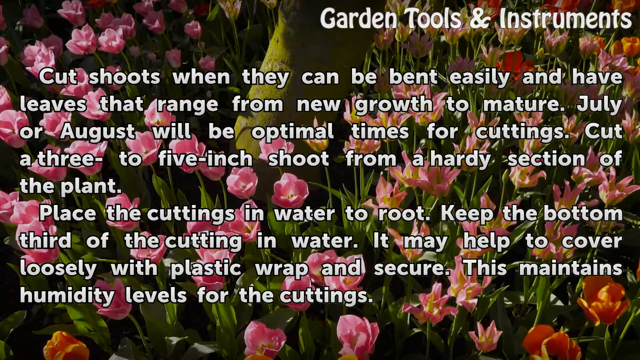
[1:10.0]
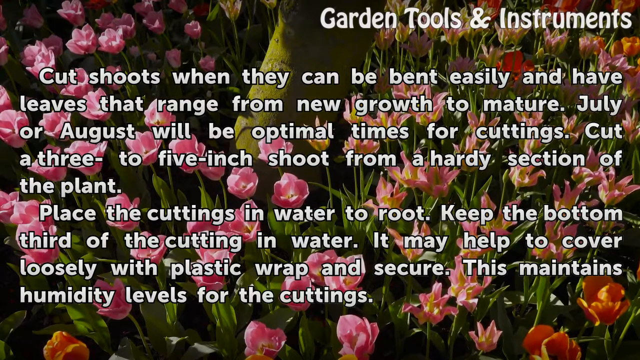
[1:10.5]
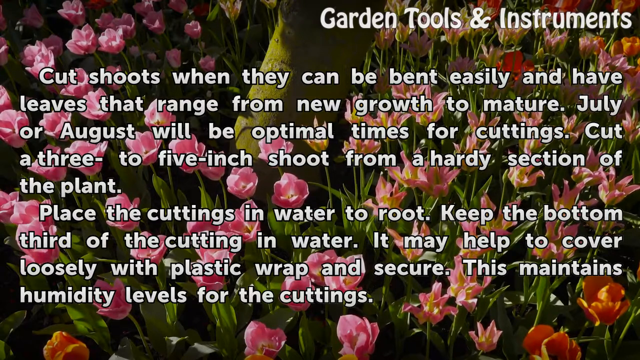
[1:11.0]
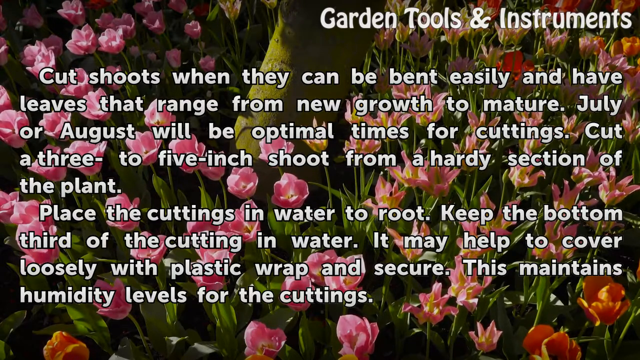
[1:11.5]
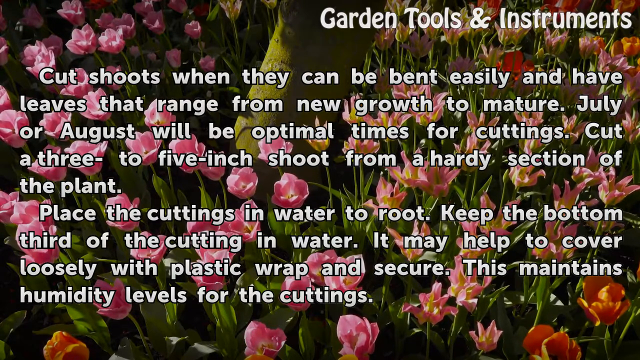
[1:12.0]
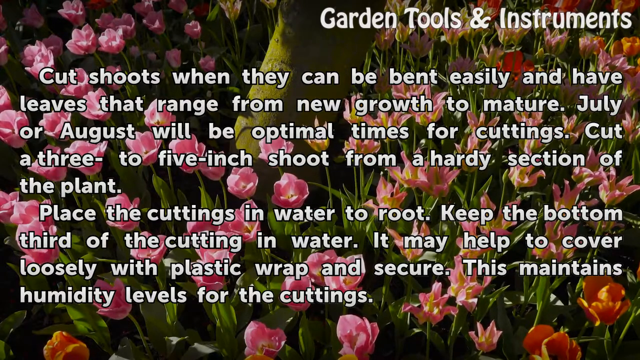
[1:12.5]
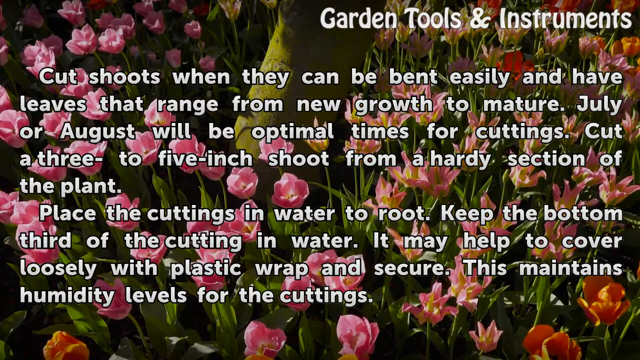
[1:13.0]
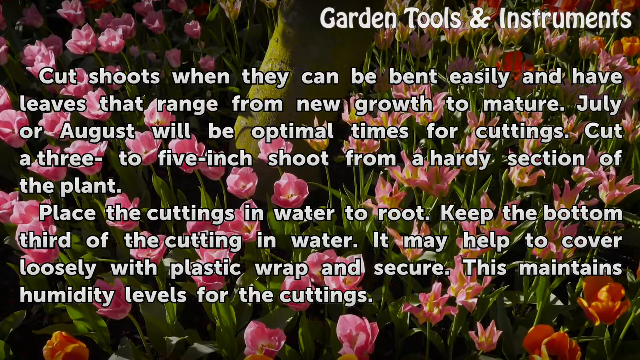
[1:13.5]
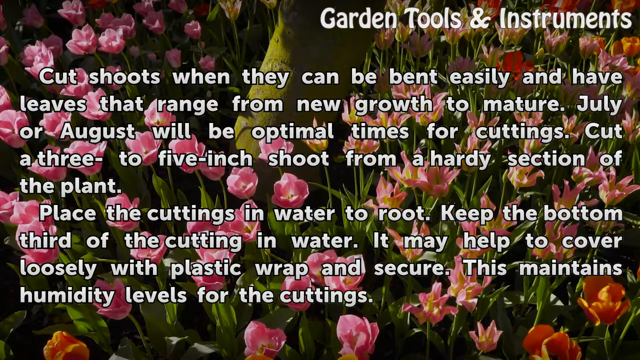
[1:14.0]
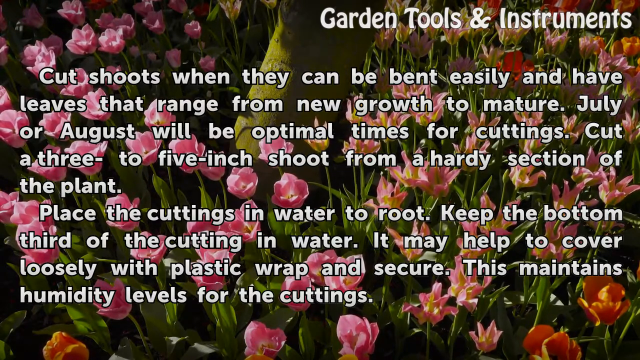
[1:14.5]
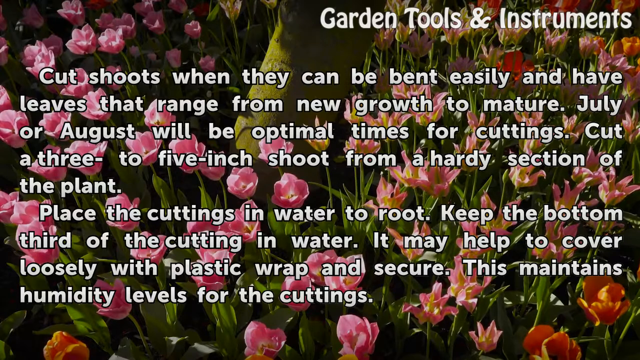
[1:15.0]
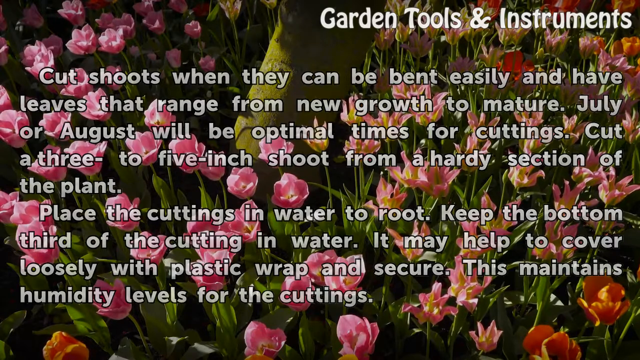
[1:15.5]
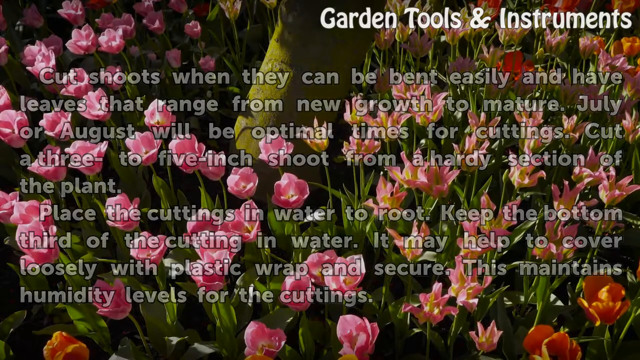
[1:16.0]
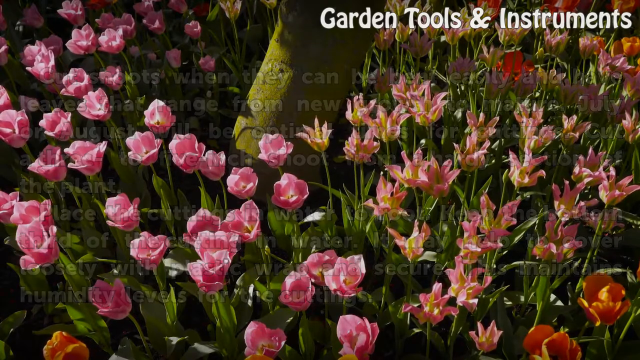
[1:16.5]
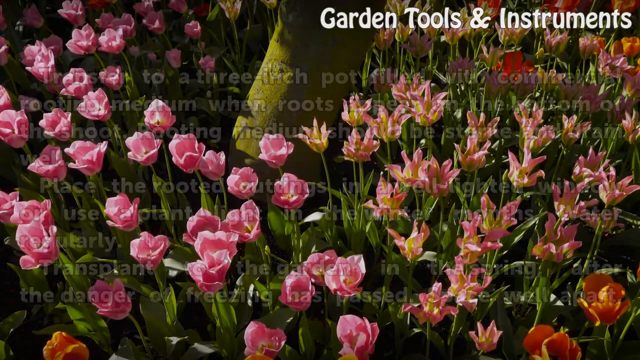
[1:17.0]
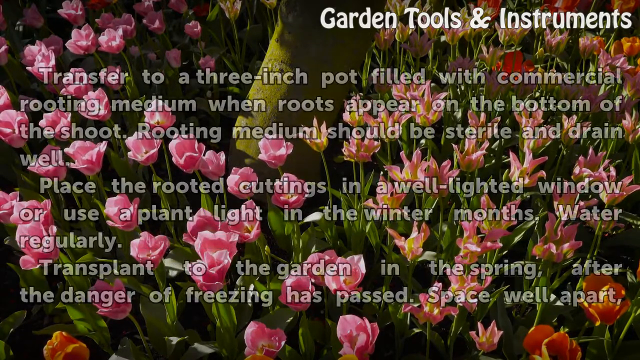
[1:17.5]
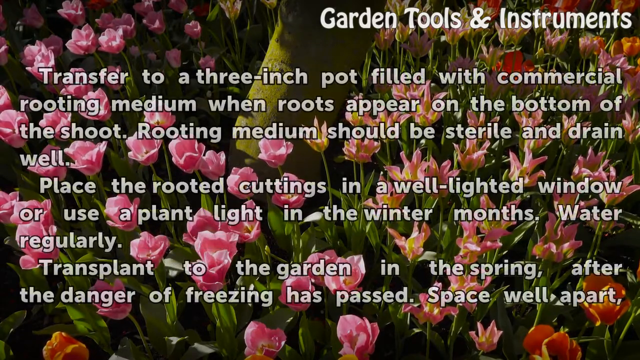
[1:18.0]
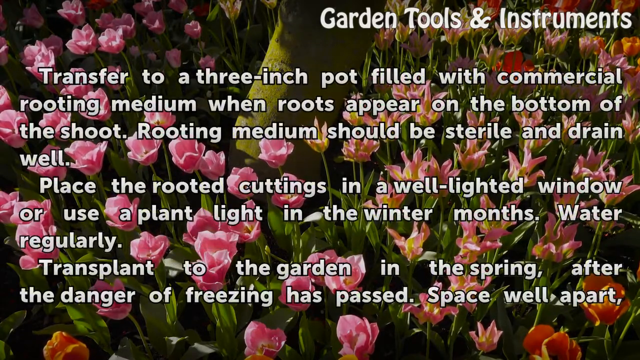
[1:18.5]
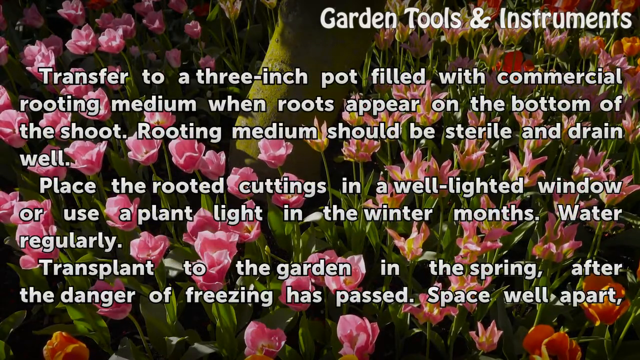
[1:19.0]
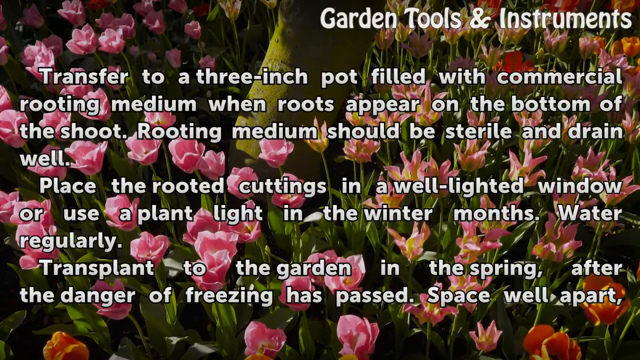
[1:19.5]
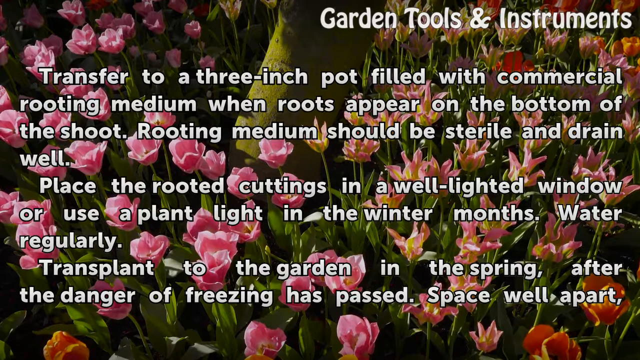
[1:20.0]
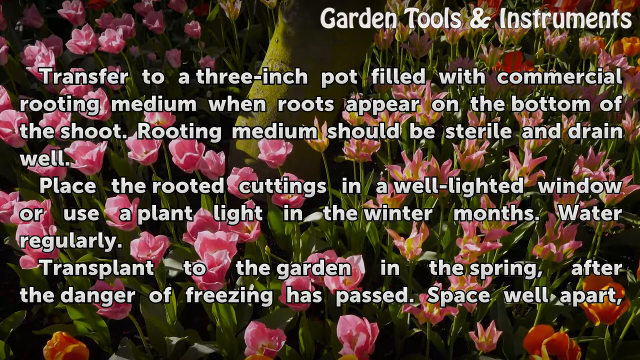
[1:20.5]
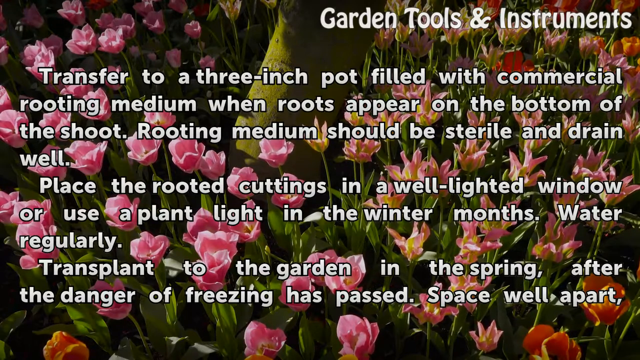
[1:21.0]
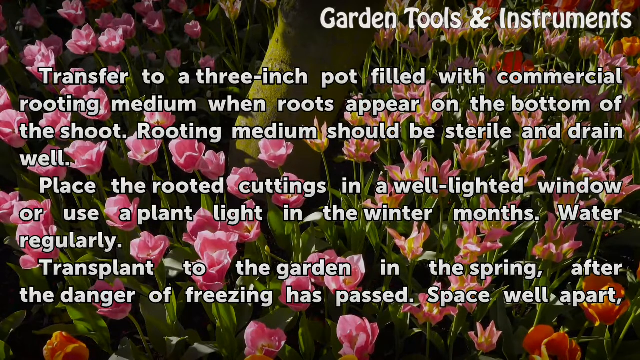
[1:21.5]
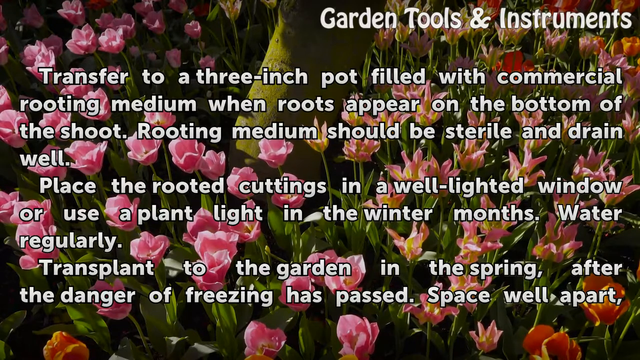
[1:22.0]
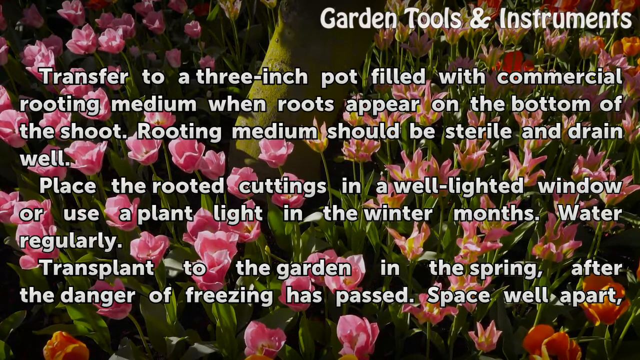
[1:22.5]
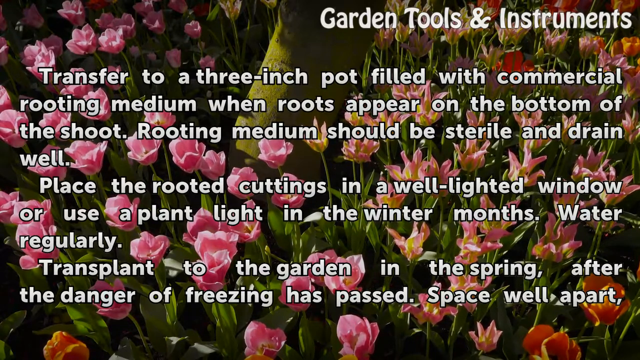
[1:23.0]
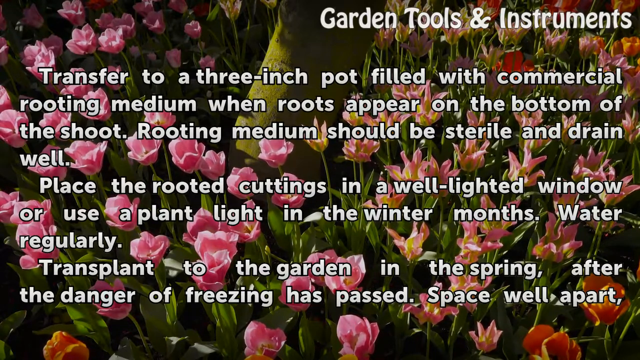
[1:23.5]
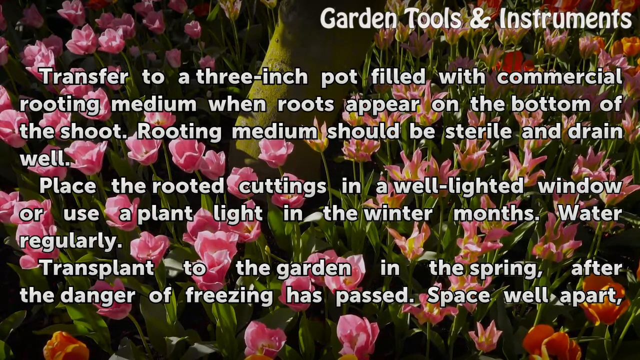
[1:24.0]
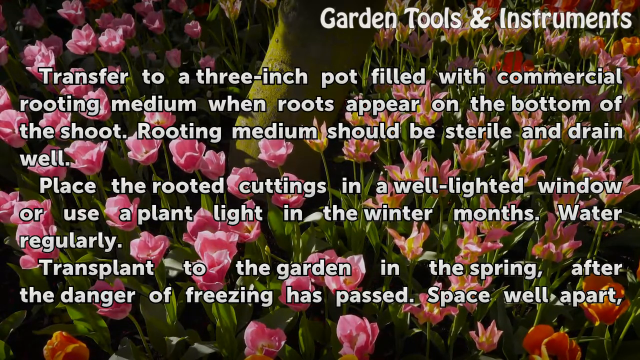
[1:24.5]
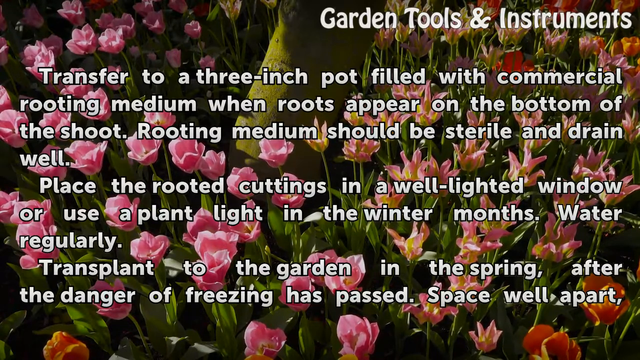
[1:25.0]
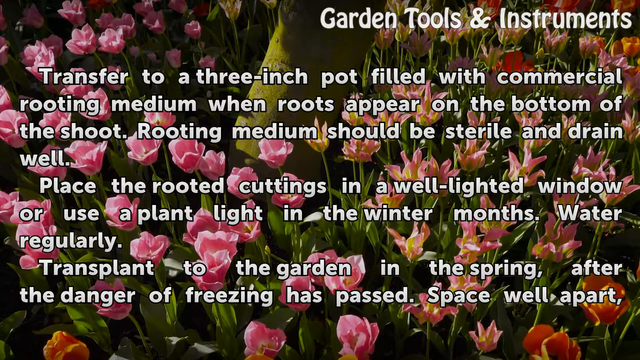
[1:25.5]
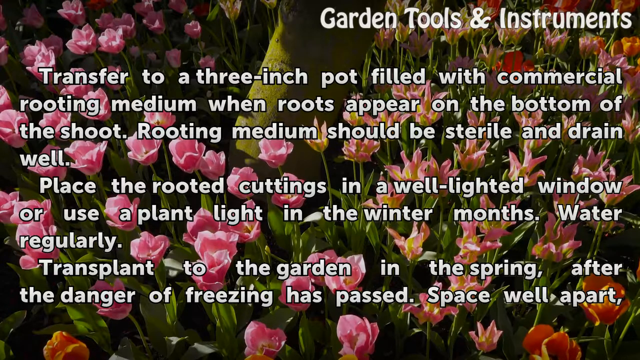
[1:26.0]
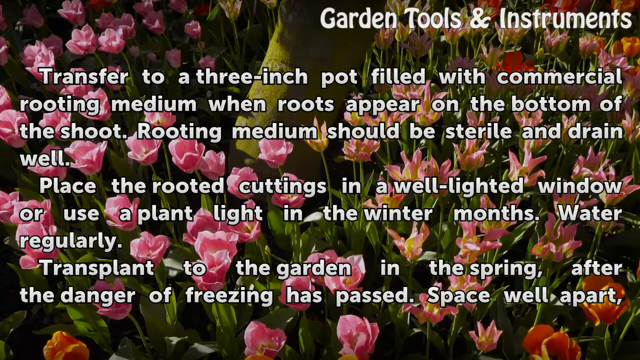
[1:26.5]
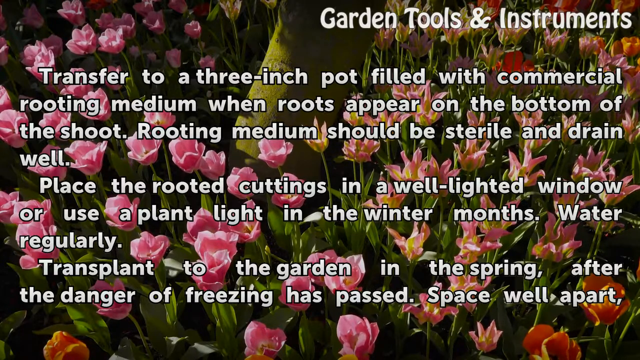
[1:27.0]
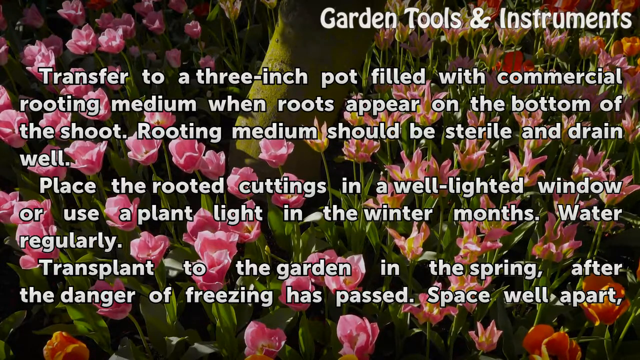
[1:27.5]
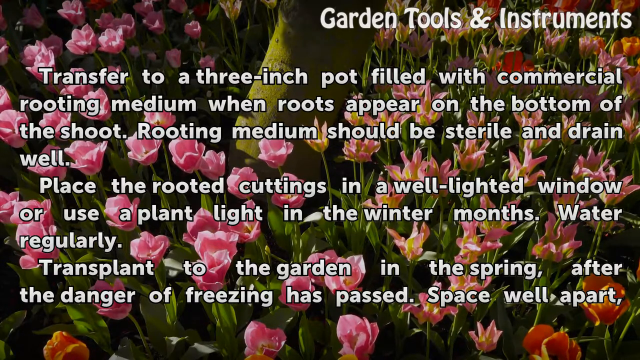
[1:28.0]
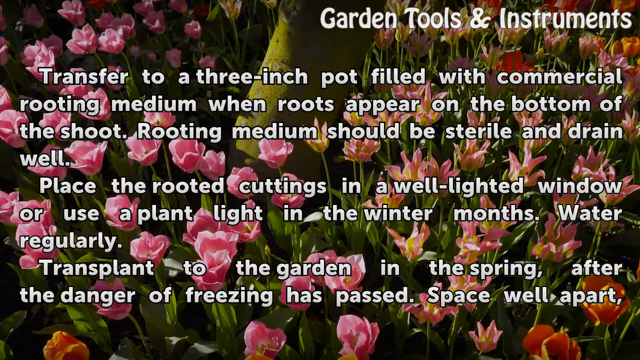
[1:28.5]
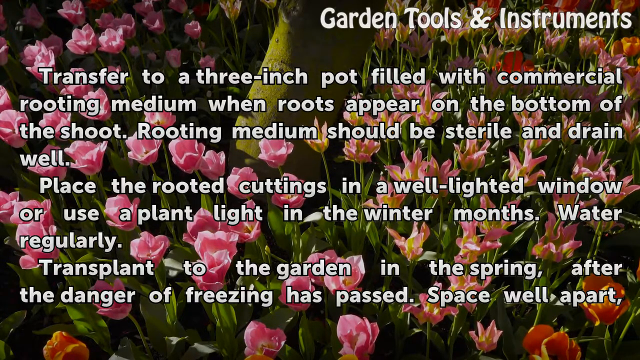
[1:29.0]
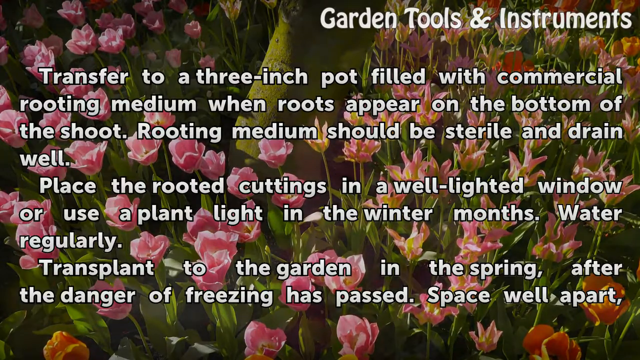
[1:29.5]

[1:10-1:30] Pink decorative flowers sway slowly in the wind in the background. Superimposed over them is white text reading "Cut shoots when they can be bent easily and have leaves that range from new growth to mature. July or August will be the optimal times for cuttings. Cut a 3 to 5 inch shoot from a hardy section of the plant. Place the cuttings in water to root. Keep the bottom third of the cutting in water. It may help to cover loosely with plastic wrap and secure. This maintains humidity levels for cuttings." The video then transitions to a new paragraph of text, still over the swaying flowers: "Transfer to a 3 inch pot filled with commercial rooting medium. When roots appear on the bottom of the shoot, rooting medium should be sterile and drained well. Place the rooted cuttings in a well-lighted window or use a plant light in the winter months. Water regularly. Transplant to the garden in the spring after the danger of freezing has passed. Space well apart."